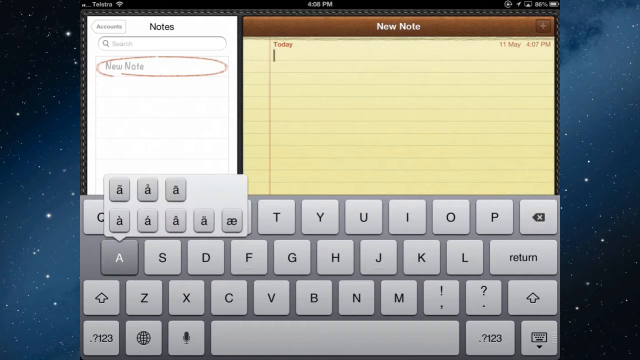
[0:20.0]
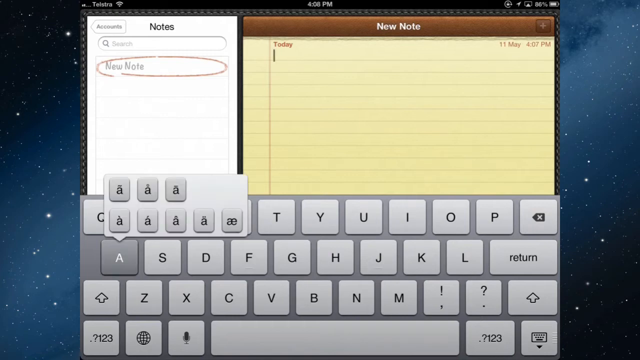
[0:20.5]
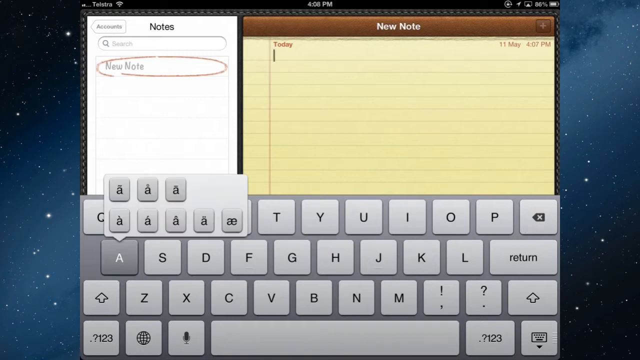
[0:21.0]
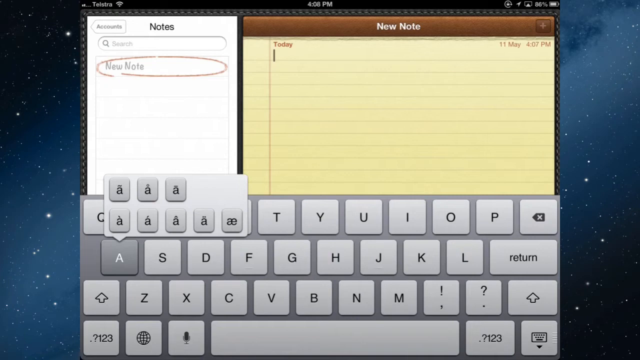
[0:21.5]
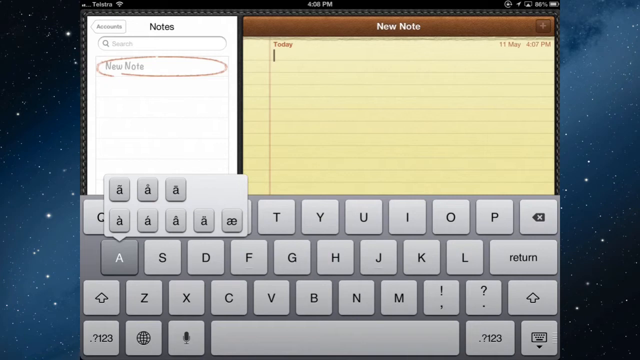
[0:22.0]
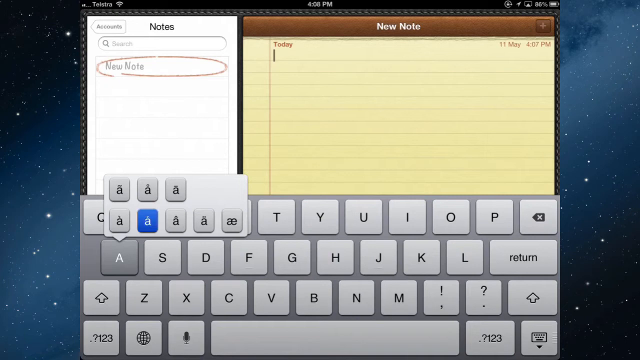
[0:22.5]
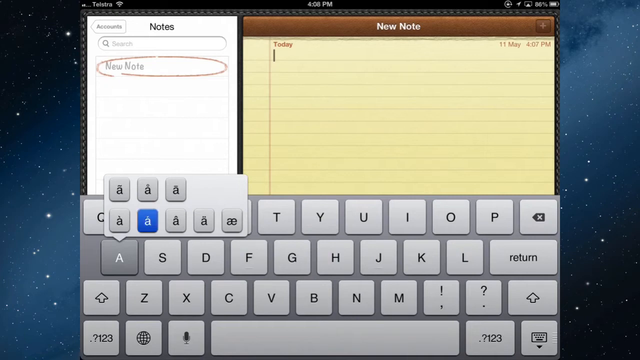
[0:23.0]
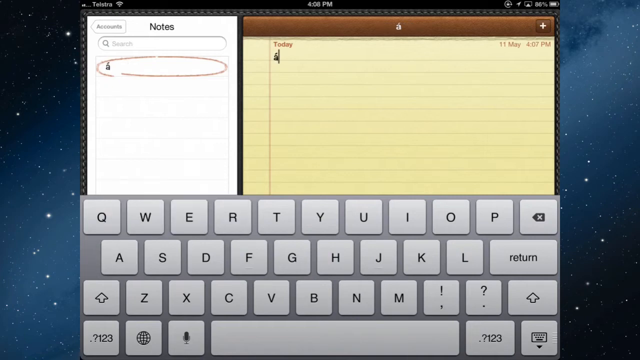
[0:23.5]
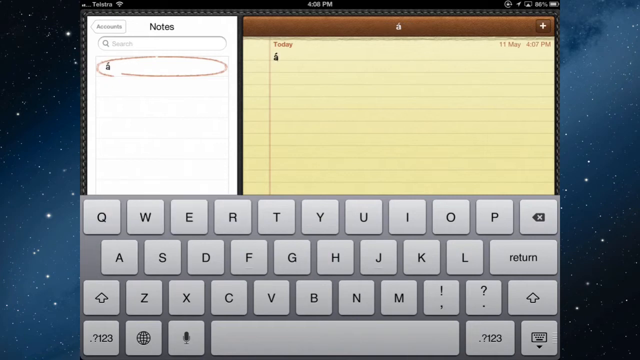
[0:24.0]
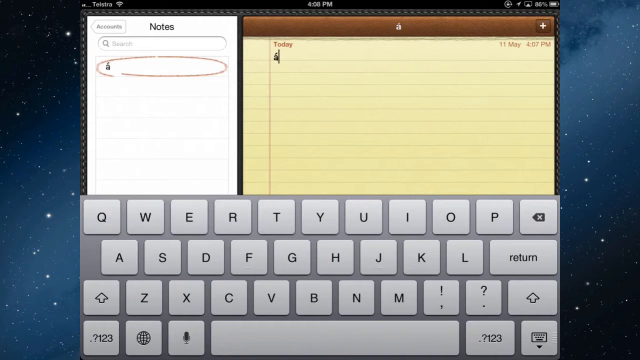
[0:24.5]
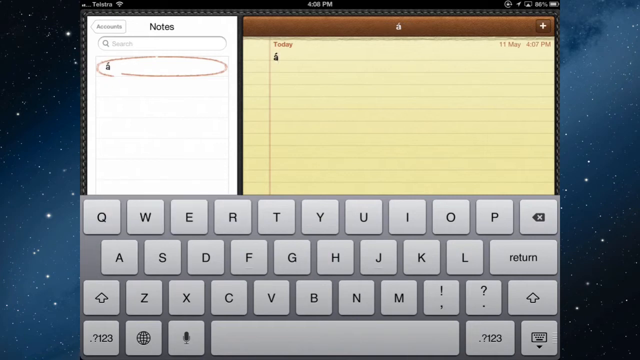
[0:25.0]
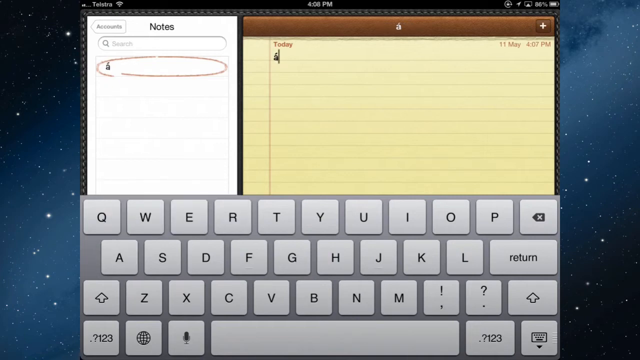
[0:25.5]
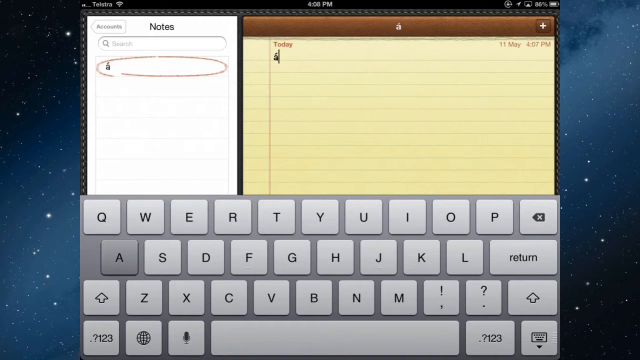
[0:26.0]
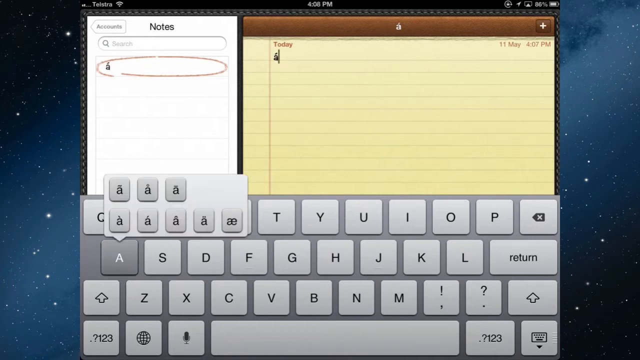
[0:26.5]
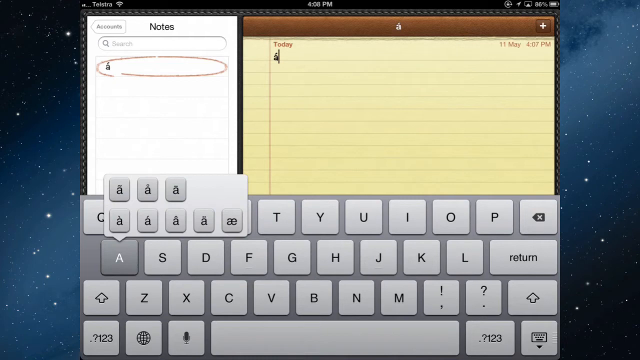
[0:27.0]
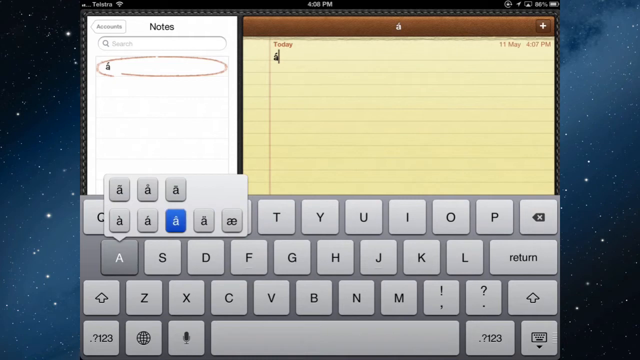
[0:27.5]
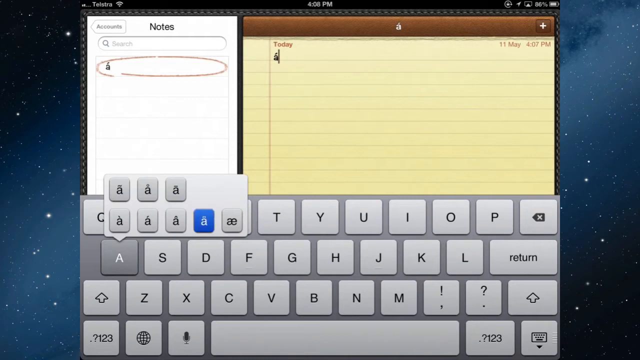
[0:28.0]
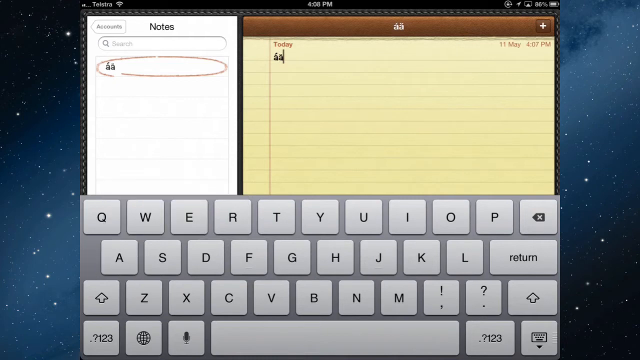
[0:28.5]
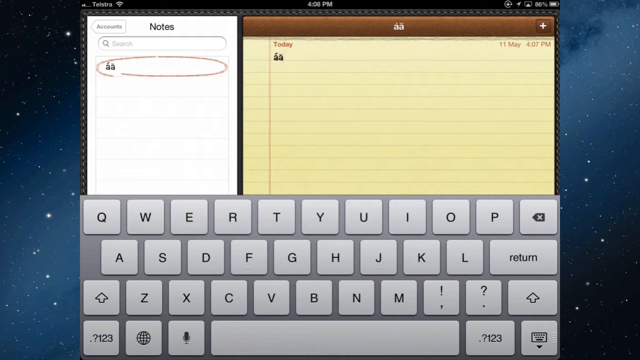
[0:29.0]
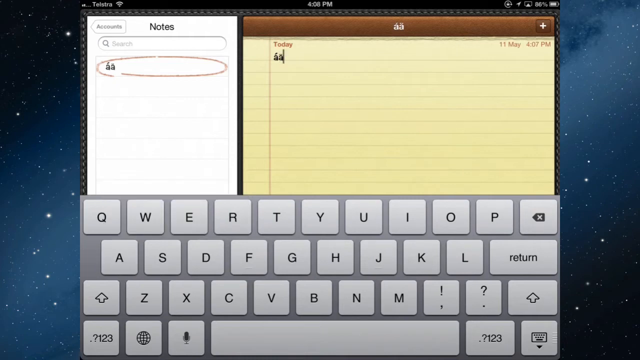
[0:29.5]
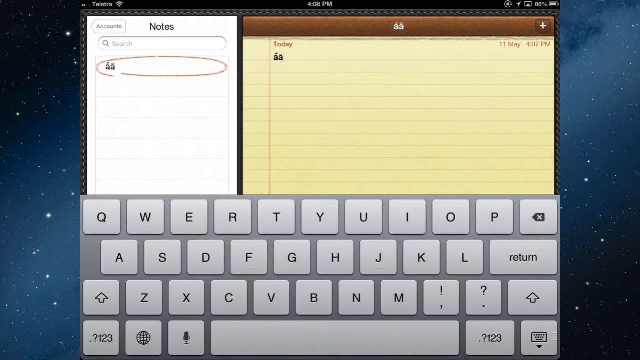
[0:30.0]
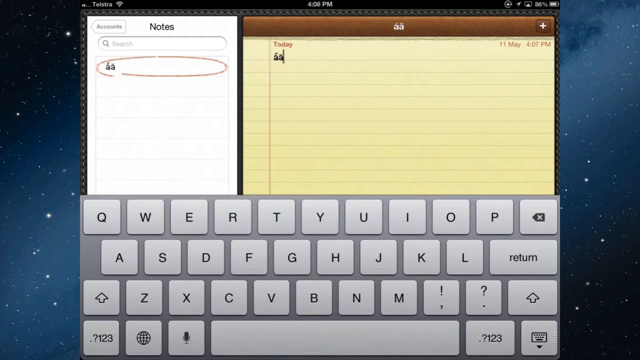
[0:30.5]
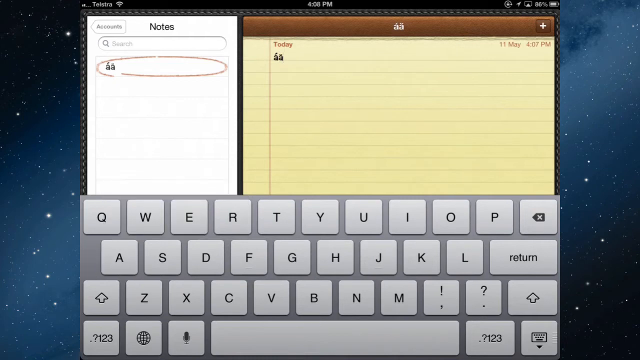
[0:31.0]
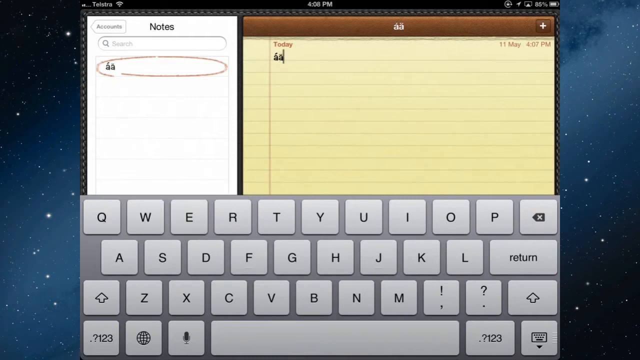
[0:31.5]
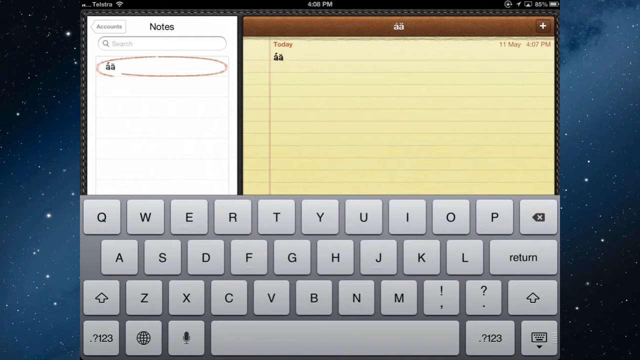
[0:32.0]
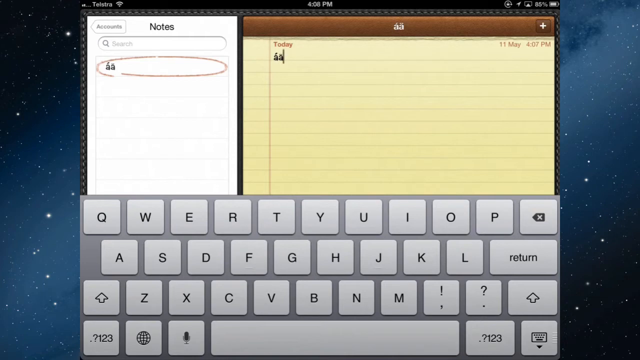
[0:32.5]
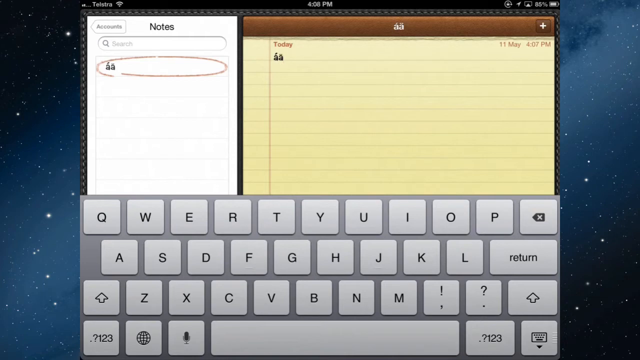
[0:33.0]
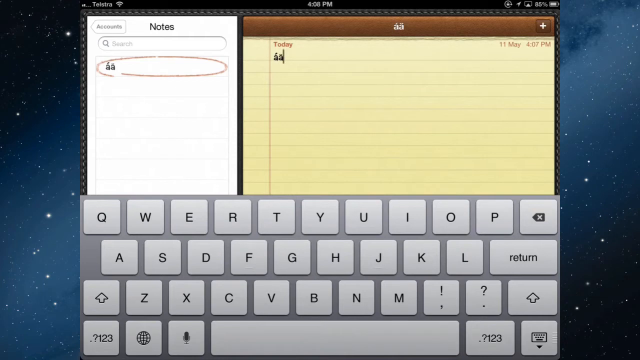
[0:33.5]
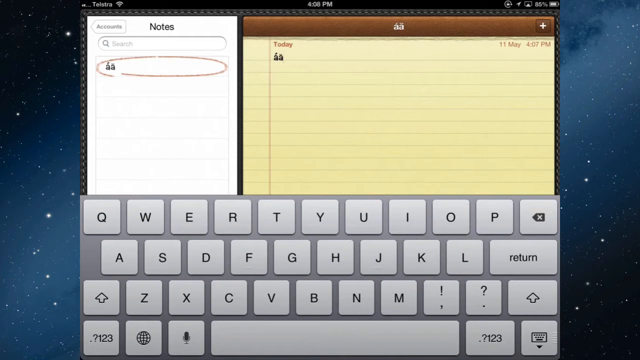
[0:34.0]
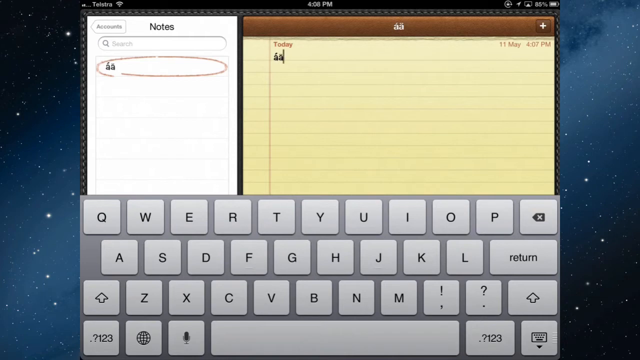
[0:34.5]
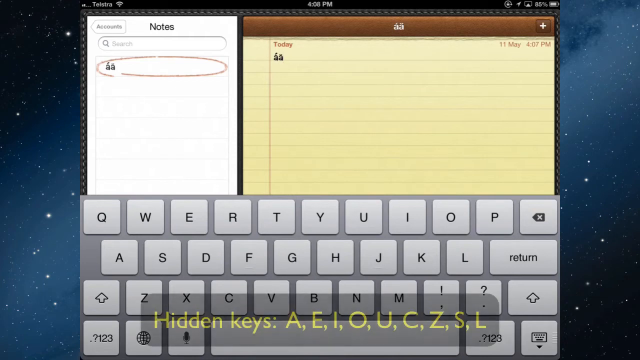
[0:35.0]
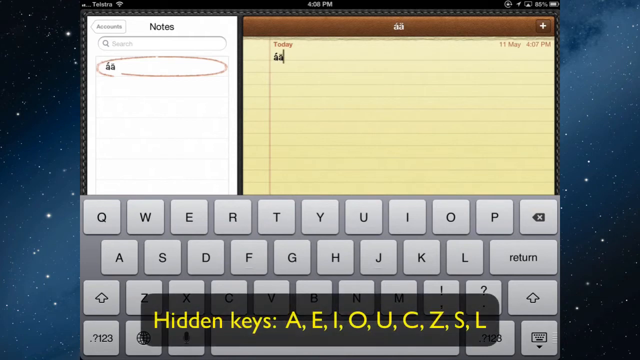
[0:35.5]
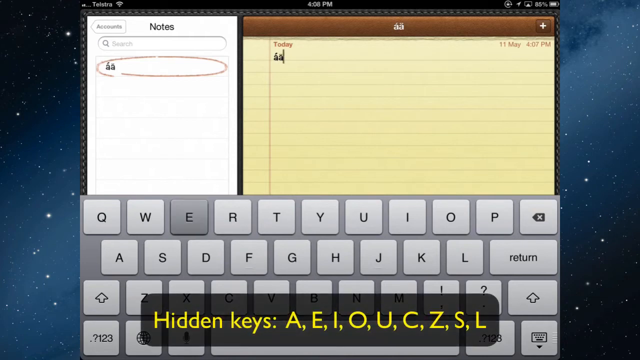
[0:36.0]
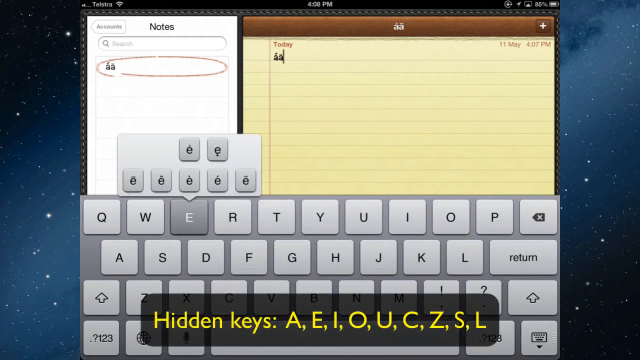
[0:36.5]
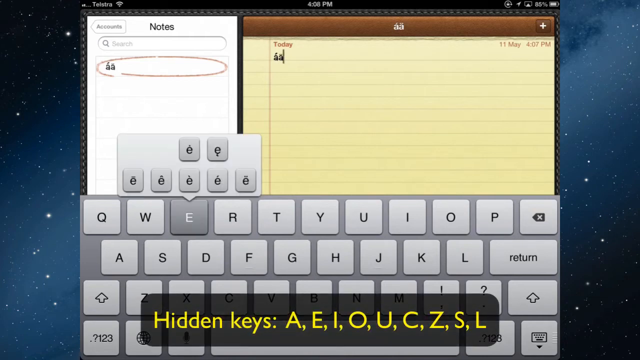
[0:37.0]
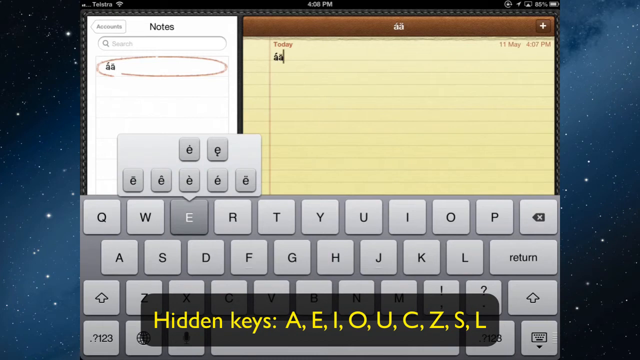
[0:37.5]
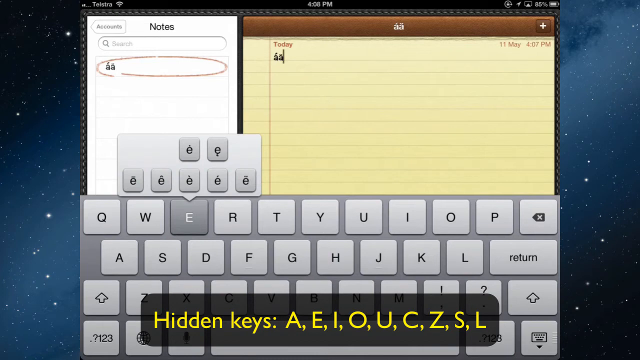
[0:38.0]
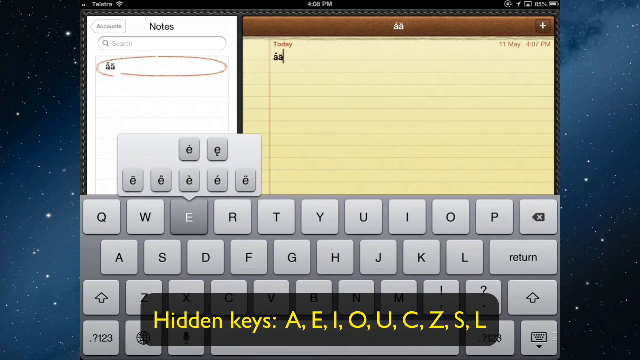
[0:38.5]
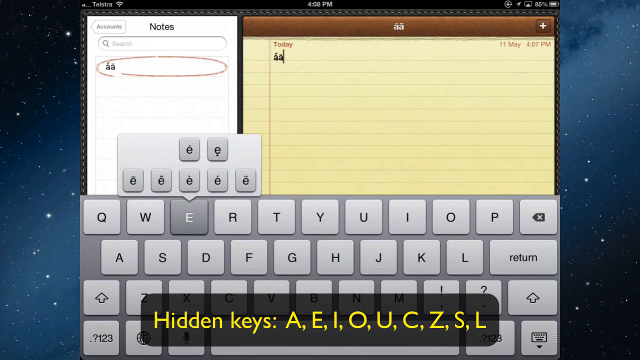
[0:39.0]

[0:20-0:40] What looks like a computer screen shows an animated yellow notepad with a brown top reading "new note" in white text. On the left side is another notepad labeled "notes" with white pages, and at the bottom of the screen is a gray keyboard. A menu appears above the keyboard on the left side, showing the letter a with many different types of lines on top of it. One of the a's is selected, its key turns blue, and the same letter is written on the yellow notepad. Next the letter e is selected, and another menu appears with many e's bearing different lines on top. At the bottom of the screen yellow text reads "hidden keys" followed by "a e i o u c z s l." The user is demonstrating all the keys hidden on the keyboard shown at the bottom of the screen.